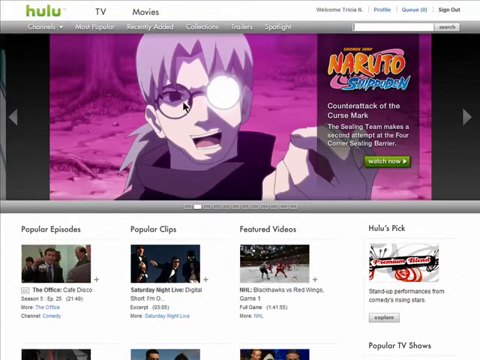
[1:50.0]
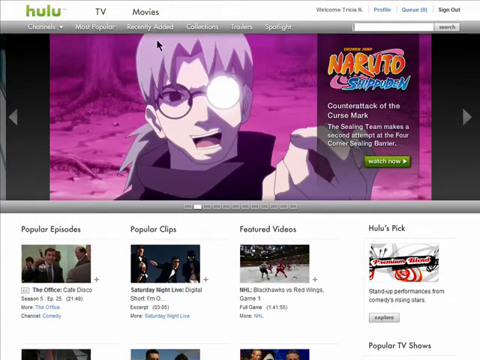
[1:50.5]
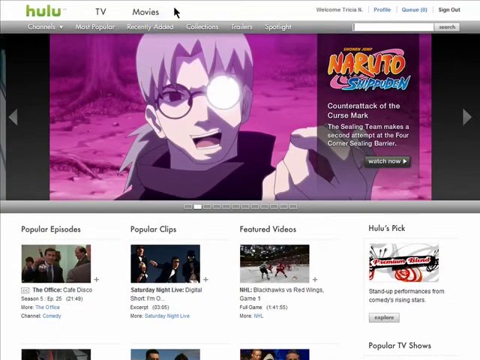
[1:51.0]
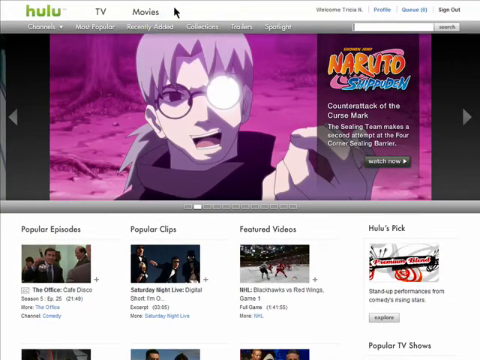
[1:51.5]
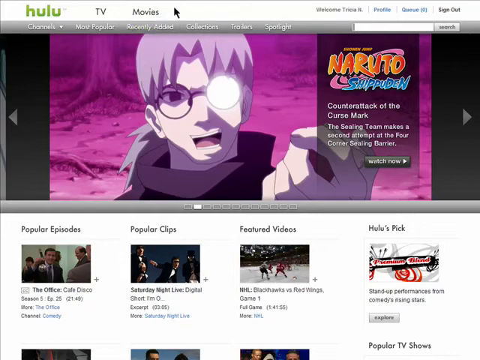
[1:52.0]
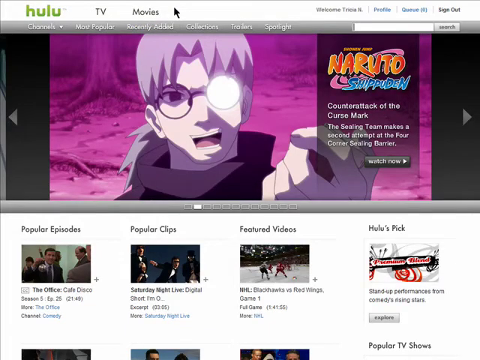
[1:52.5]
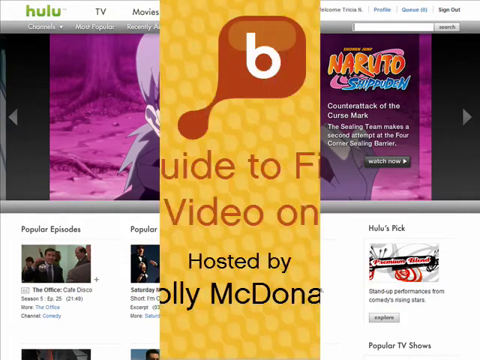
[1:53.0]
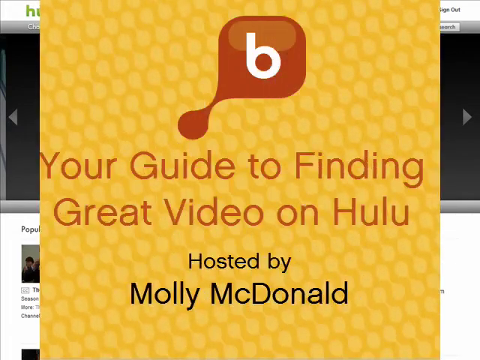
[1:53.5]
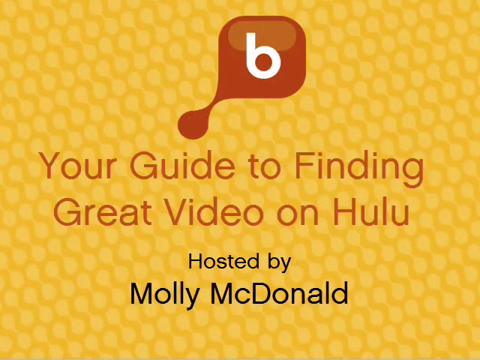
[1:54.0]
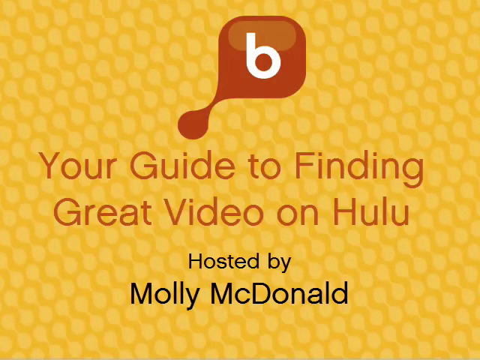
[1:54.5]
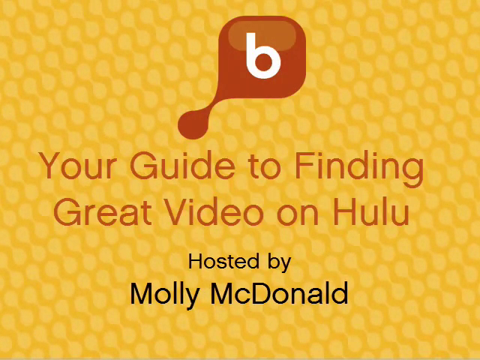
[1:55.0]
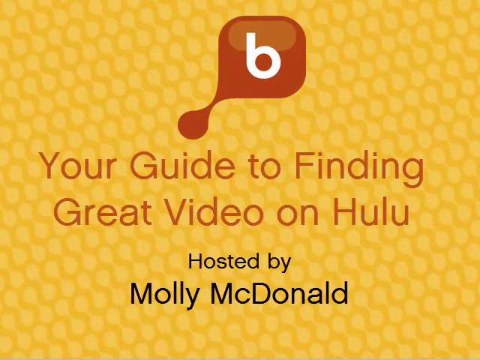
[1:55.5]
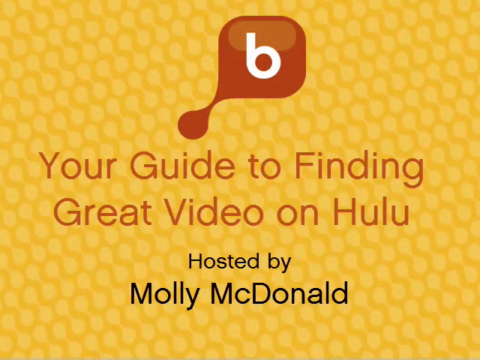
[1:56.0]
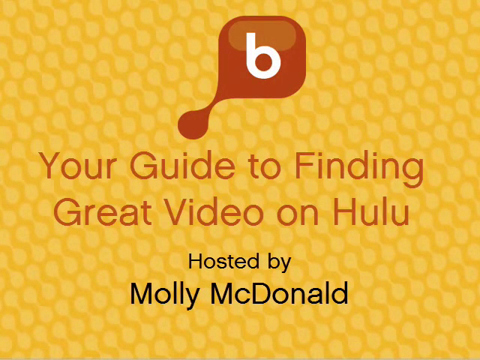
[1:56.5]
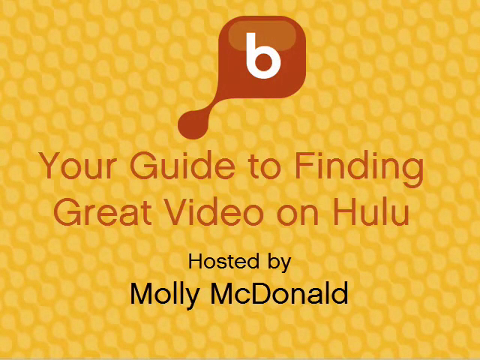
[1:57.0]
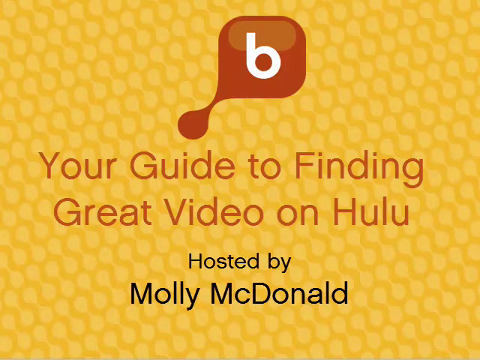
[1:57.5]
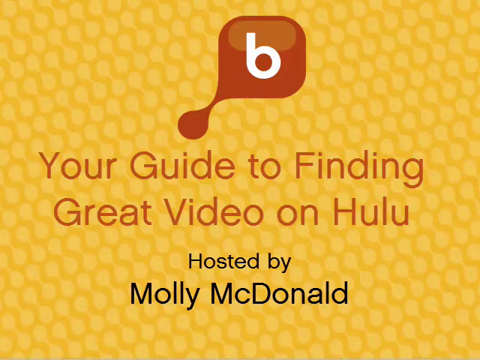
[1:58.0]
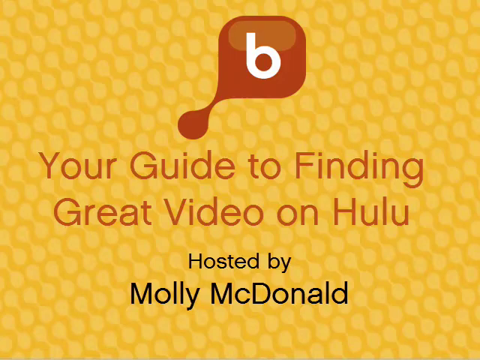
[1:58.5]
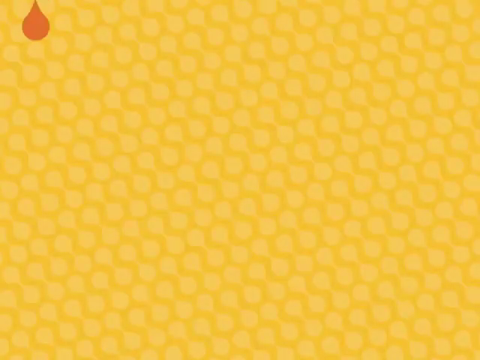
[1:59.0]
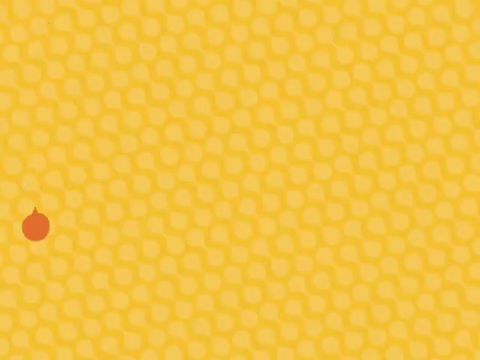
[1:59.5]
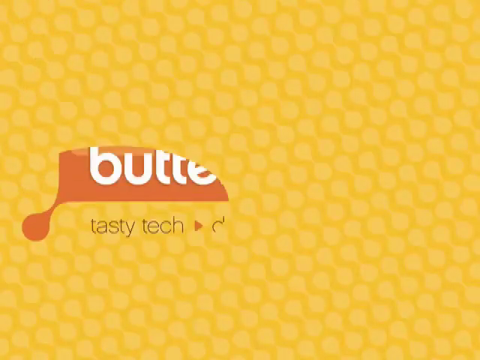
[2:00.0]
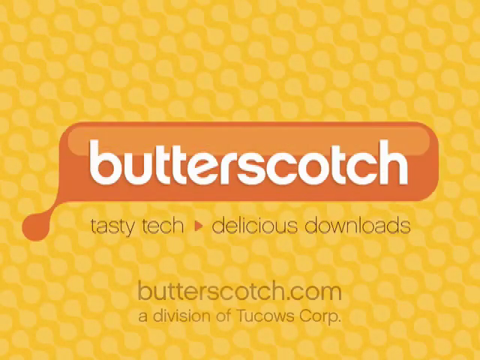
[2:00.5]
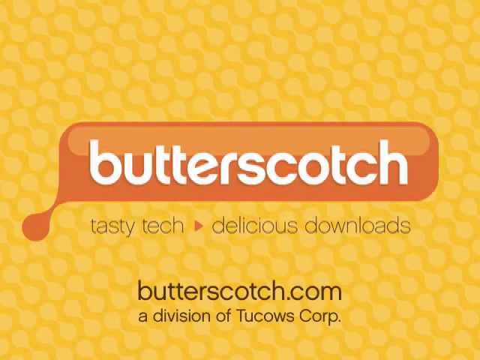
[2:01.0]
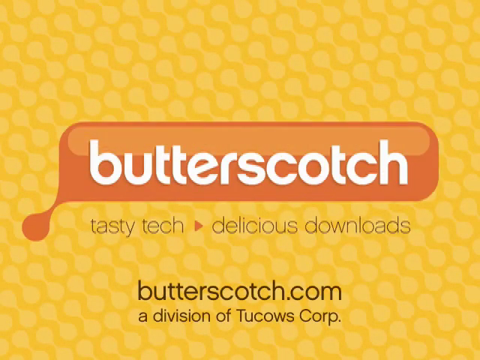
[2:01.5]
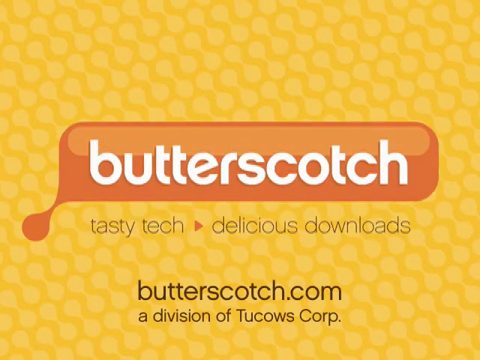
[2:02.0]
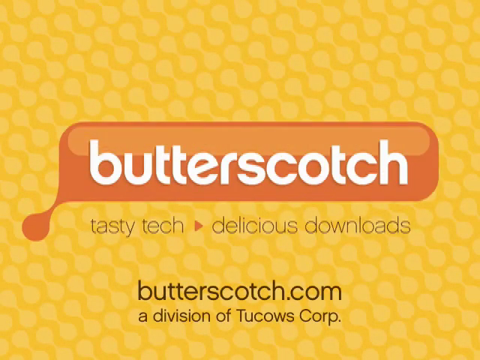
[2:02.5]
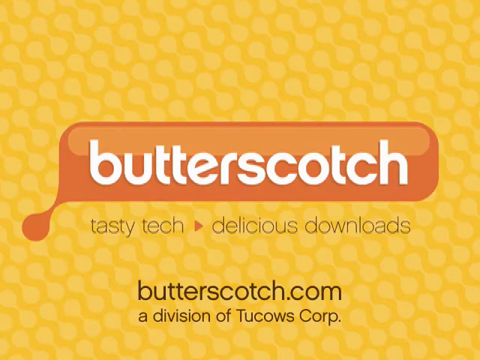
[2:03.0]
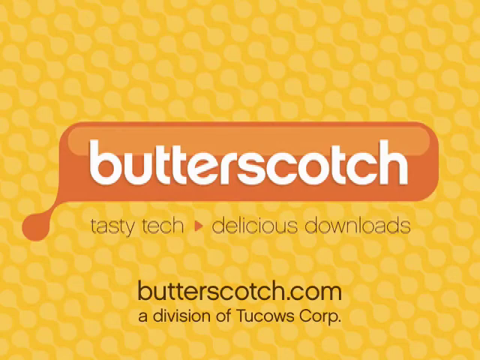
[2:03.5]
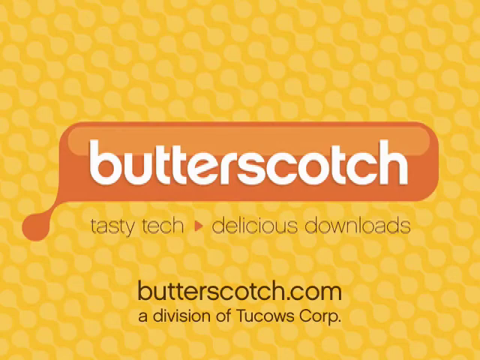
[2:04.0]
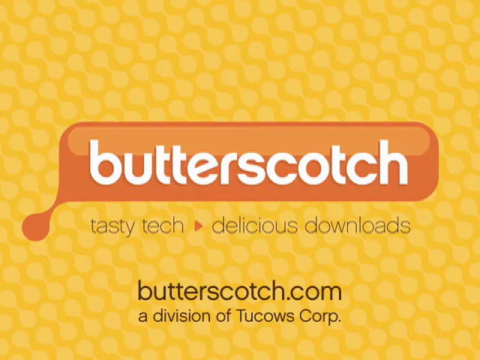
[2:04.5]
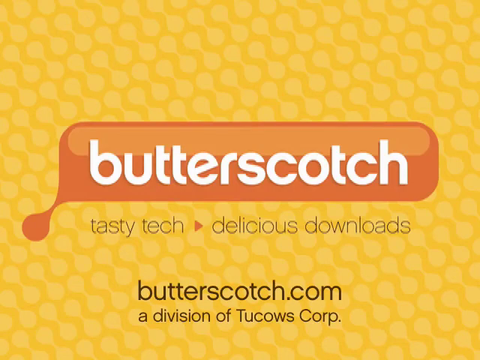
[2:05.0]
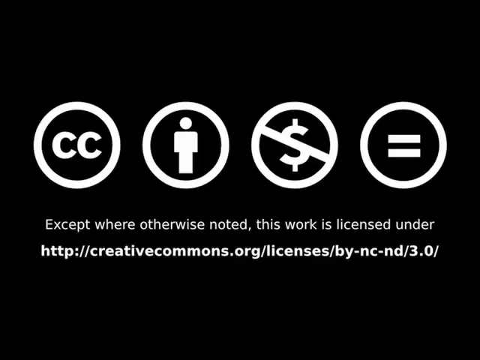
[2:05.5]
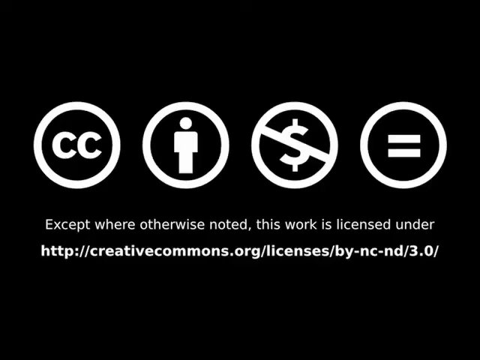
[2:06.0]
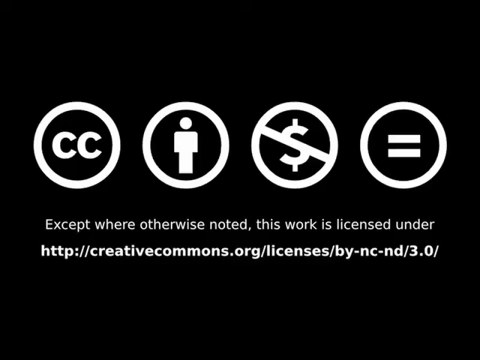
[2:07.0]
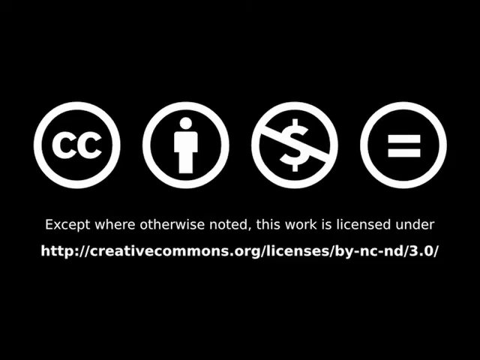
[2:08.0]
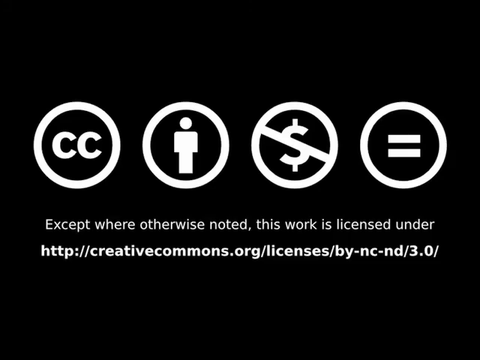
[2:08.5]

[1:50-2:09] She is on the Hulu main page, signed in, with options such as TV and movies and sections for popular episodes, popular clips, featured videos and Hulu pics. A picture of an anime, Naruto, appears with a watch now button. The cursor goes to a white bar with most popular, recently added, collections, trailers and spotlight. The next shot shows "your guide to finding great videos on Hulu," hosted by Wally McDonald, on an orange background, with a logo of a white bee on an orange square. A rectangle logo shows butterscotch, with text including "delicious downloads" and "butterscotch.com." At the end there is a CC symbol, a circle with a man, a circle with a crossed-out dollar, and a circle with an equals sign, along with a note on how the work is licensed and a link to it.